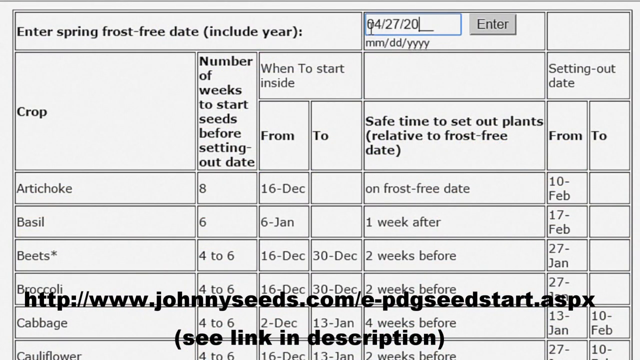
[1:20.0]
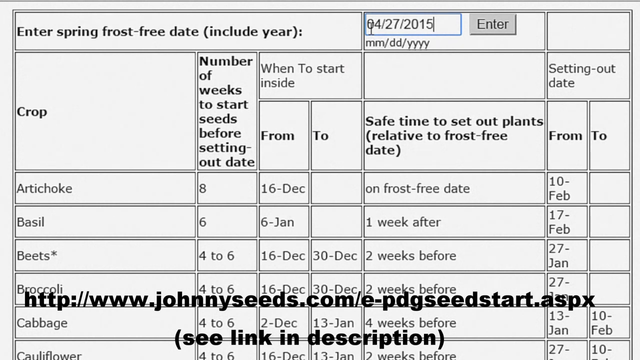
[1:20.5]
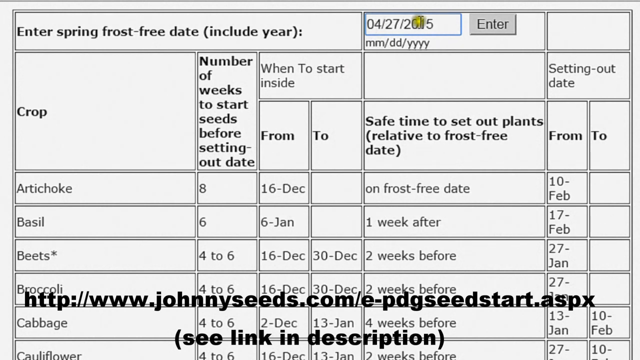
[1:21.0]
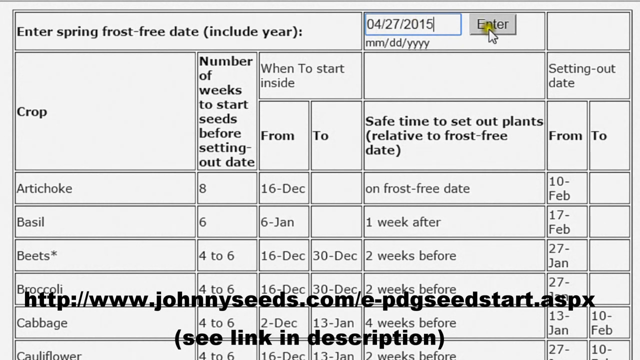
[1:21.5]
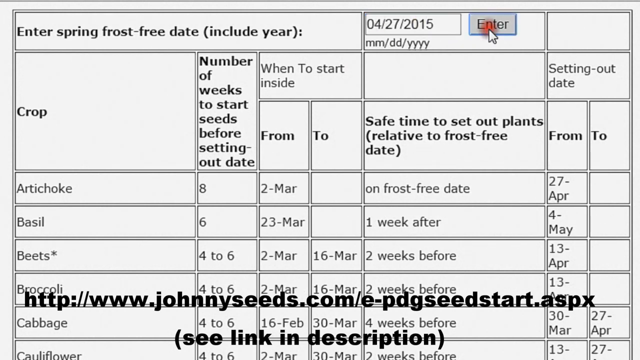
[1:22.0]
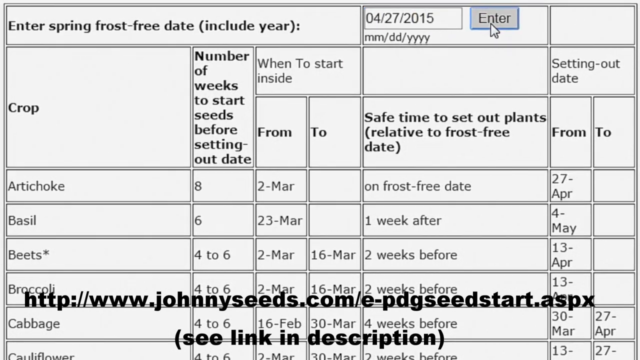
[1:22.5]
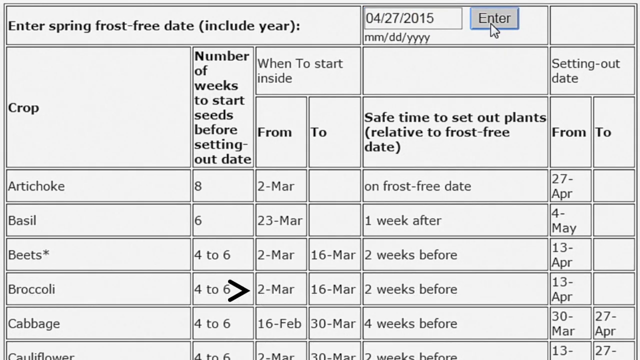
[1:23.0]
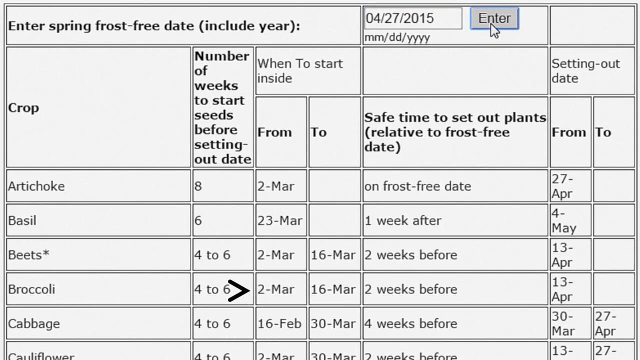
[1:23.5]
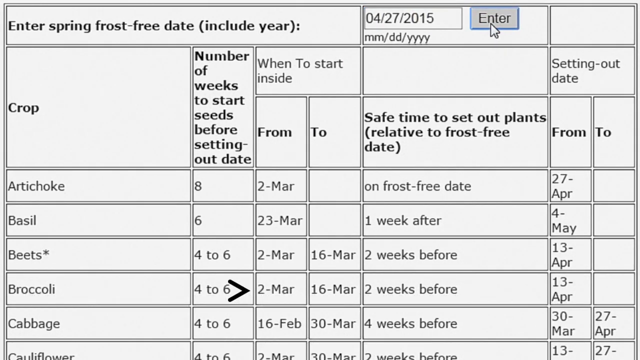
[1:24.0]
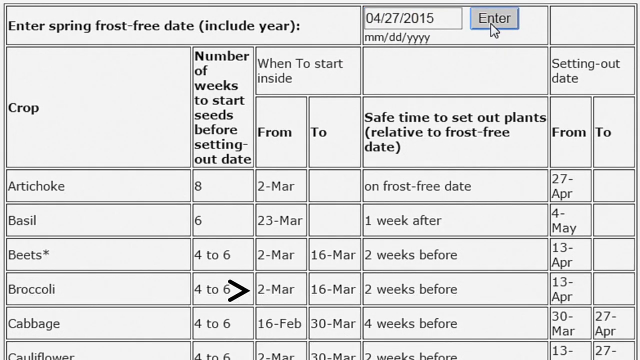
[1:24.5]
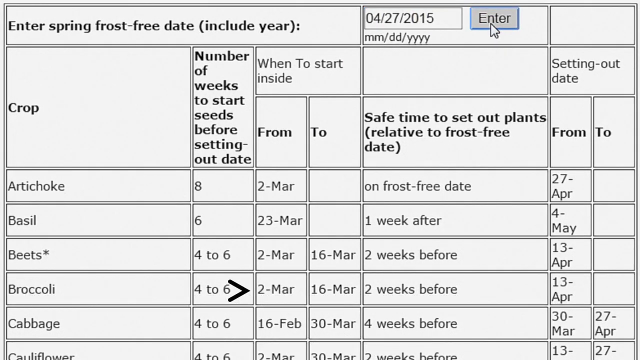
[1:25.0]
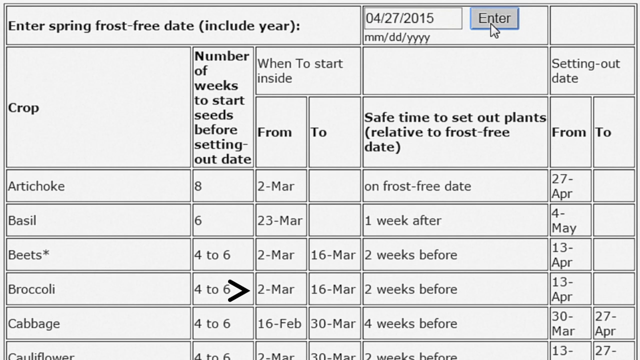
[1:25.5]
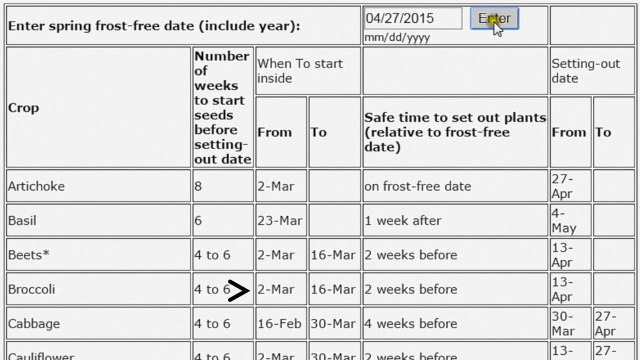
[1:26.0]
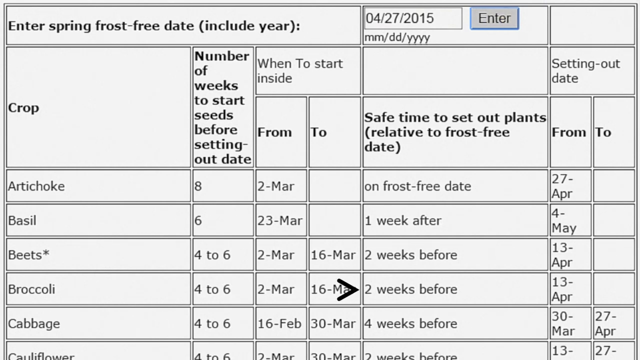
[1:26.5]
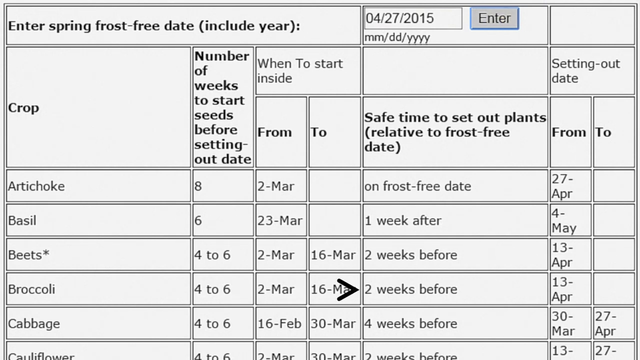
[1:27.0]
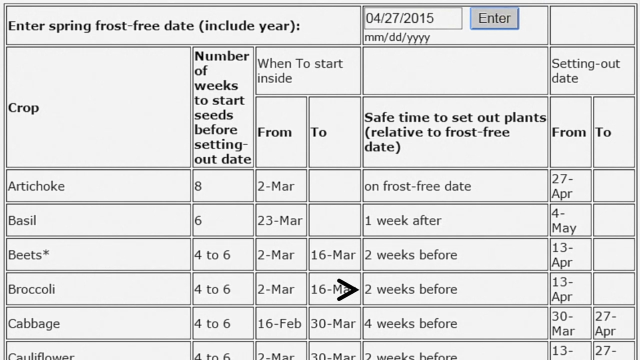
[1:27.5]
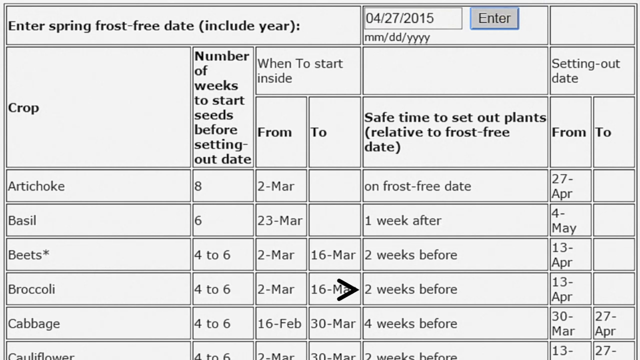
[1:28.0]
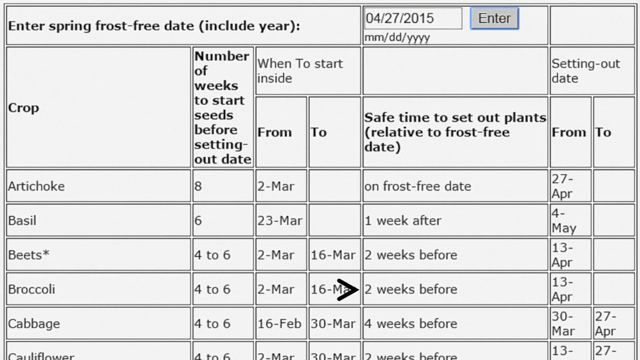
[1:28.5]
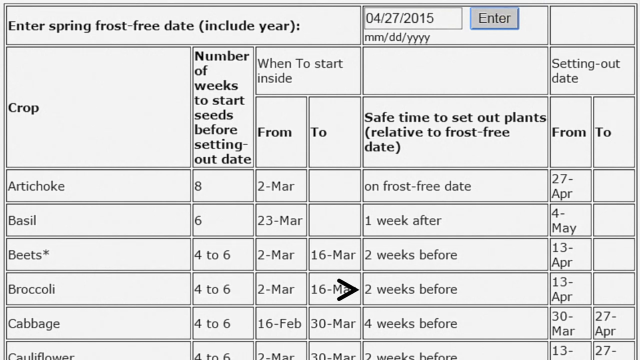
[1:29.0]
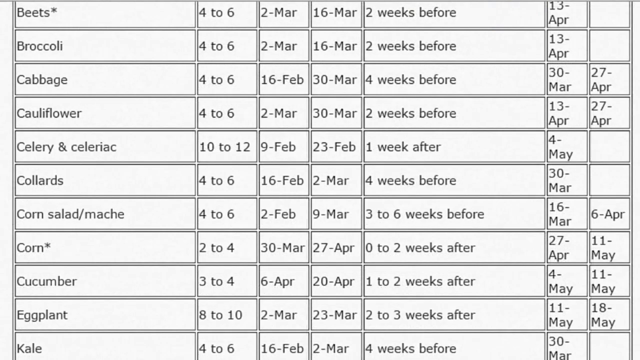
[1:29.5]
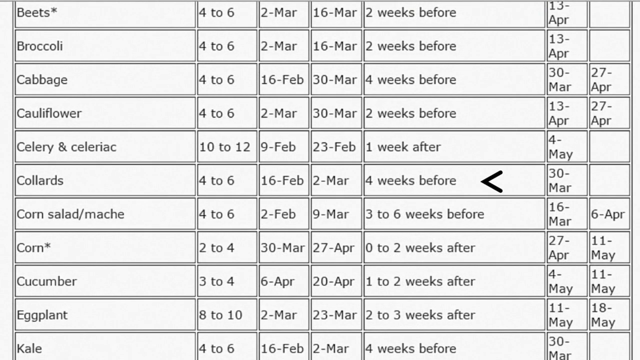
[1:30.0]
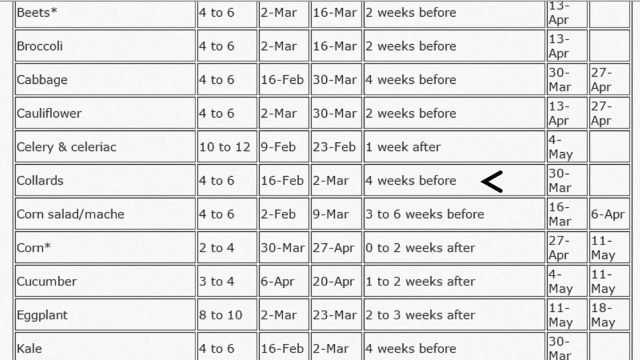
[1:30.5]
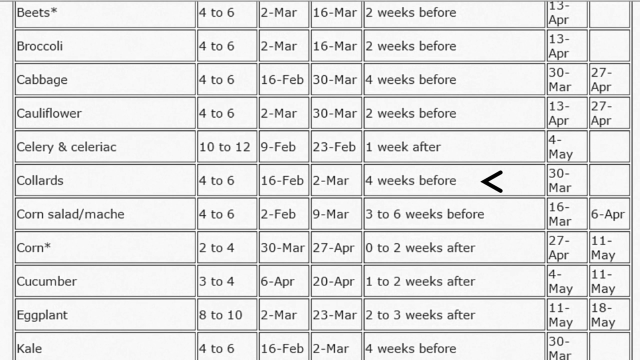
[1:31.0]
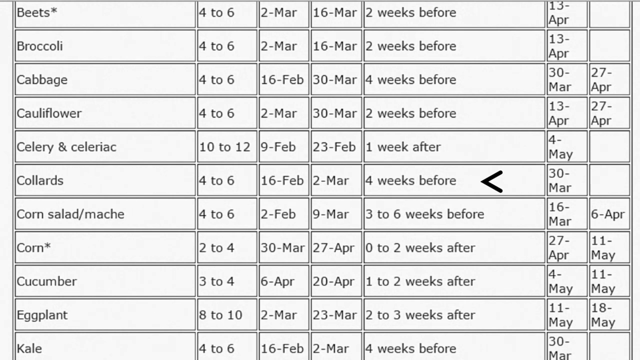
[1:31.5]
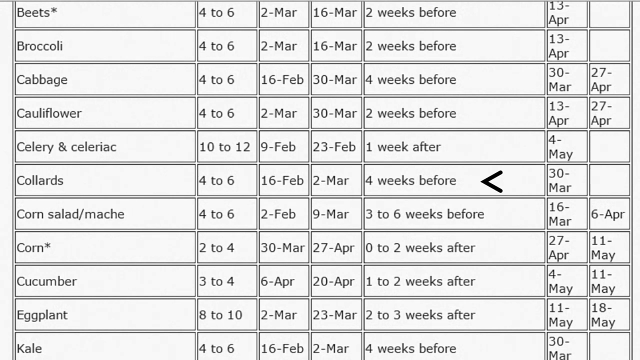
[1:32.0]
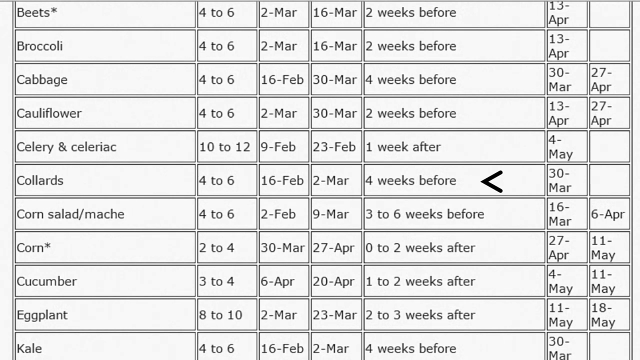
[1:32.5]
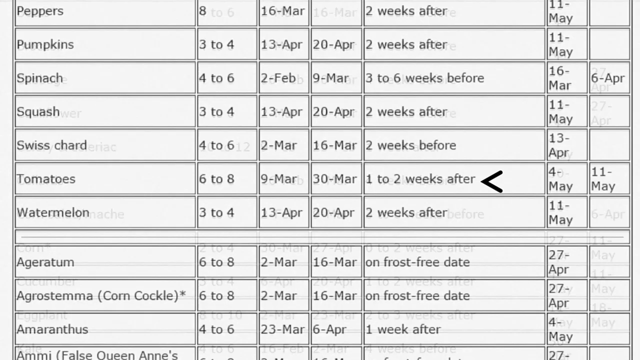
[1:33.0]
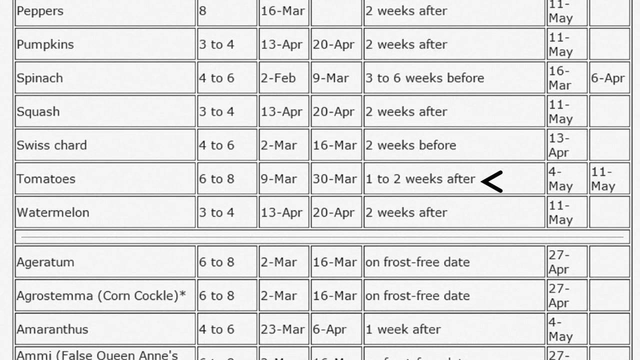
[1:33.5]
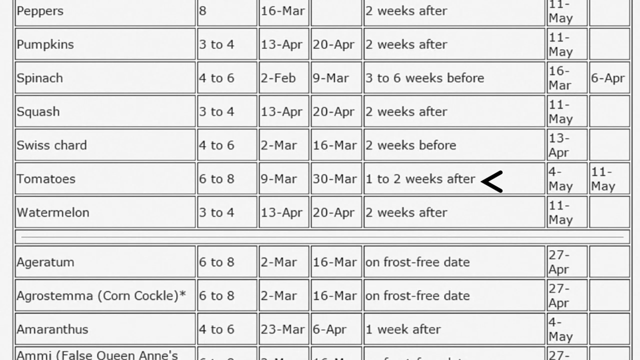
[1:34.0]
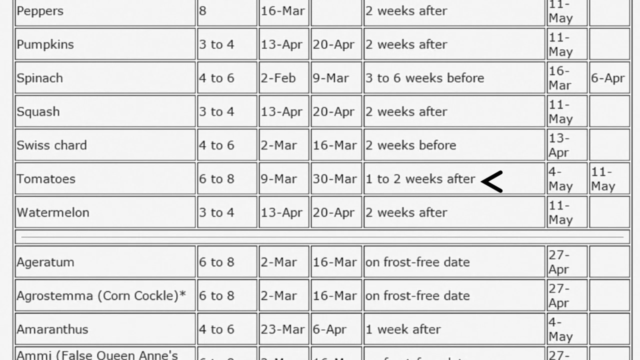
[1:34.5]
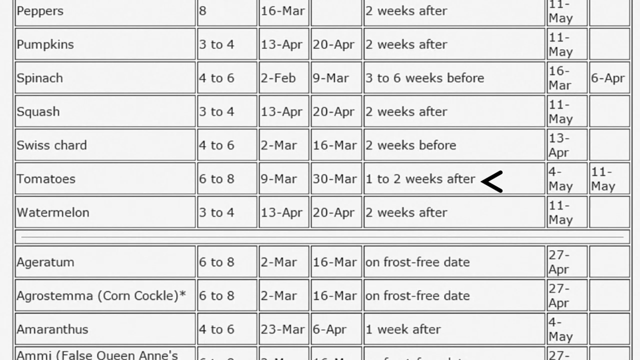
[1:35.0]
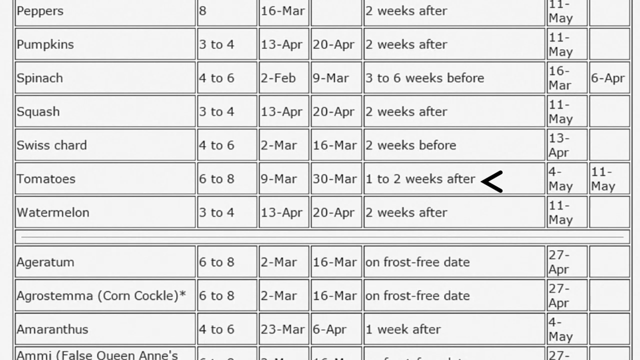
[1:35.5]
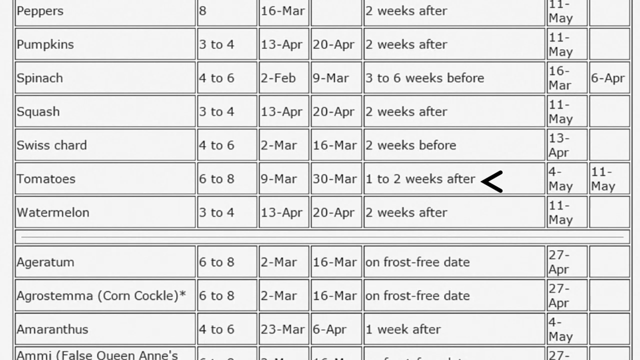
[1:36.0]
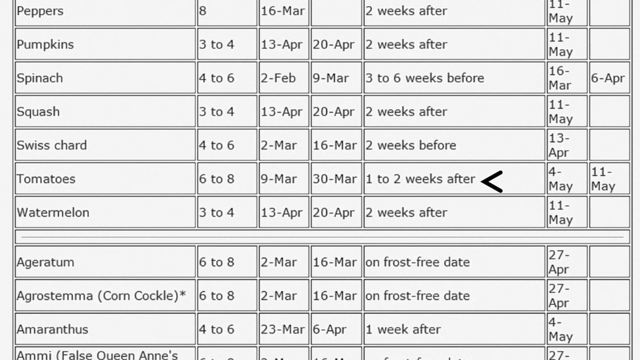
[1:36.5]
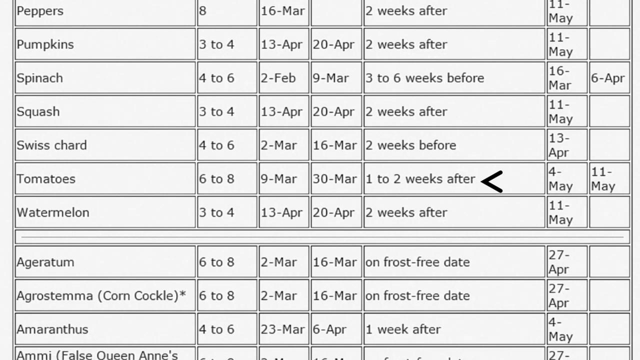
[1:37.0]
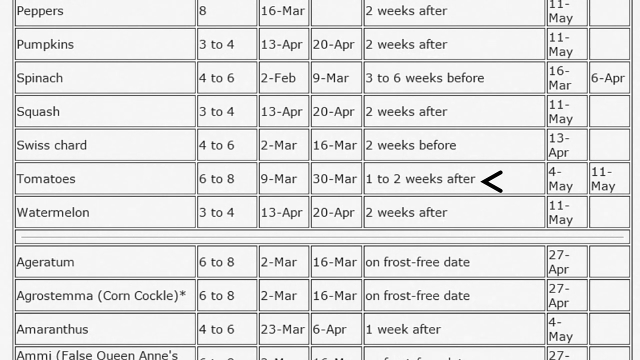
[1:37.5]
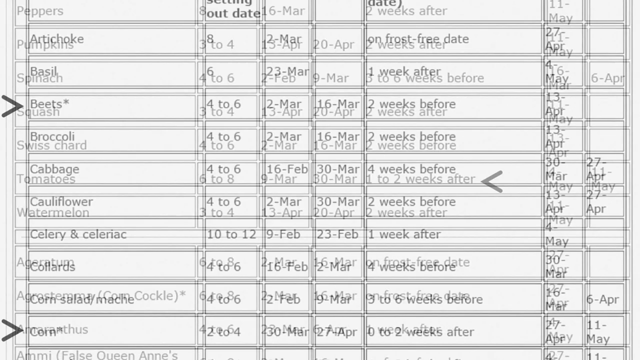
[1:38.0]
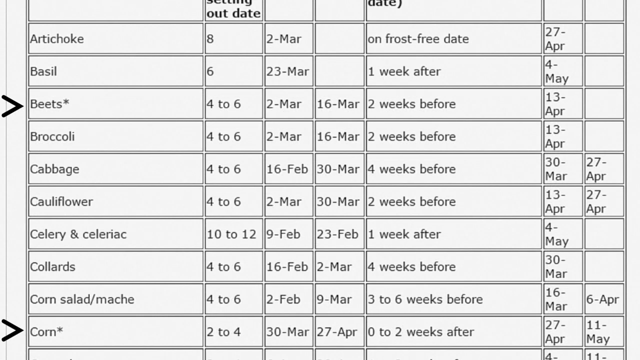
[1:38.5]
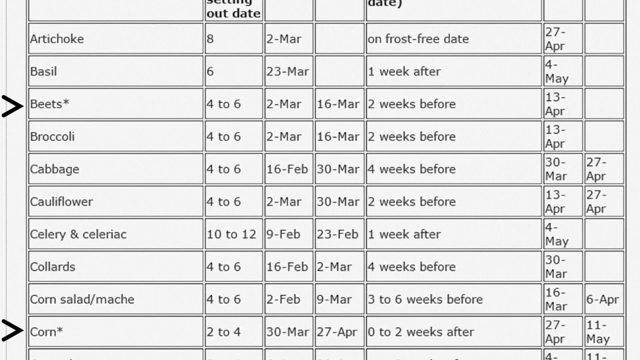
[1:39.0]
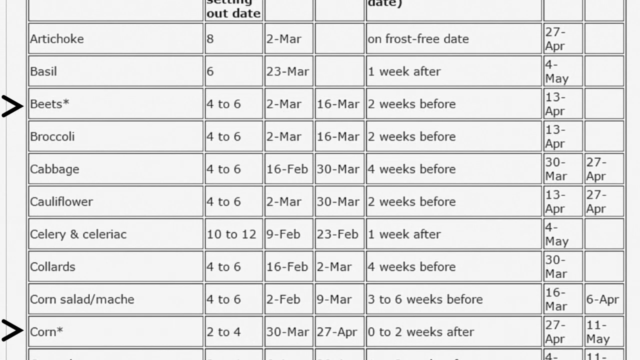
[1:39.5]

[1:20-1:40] The table shows safe dates for planting crops relative to the last frost date, the 27th of April for this area, with some crops that can be planted before it and some that must wait until after. Cabbage can go in four weeks before, and broccoli two weeks before, on the 13th of April. Collard greens are an early crop, planted on the 30th of March. Tomatoes go in after the safe date, between the 4th and the 11th of May, and squash and pumpkin two weeks after. Beets can go in two weeks before, and corn around the time of the last frost. The planting dates range widely, with green brassicas going in first and salad crops and squashes last.